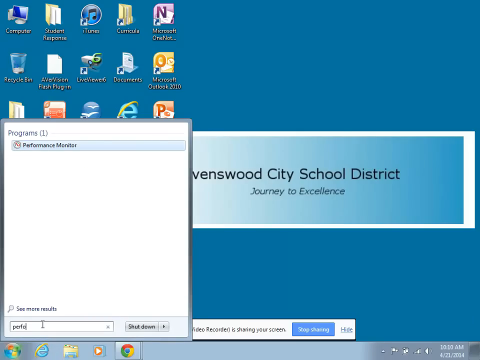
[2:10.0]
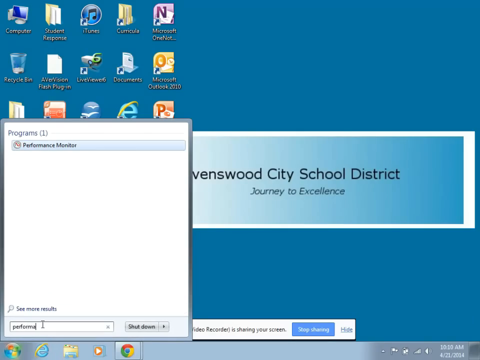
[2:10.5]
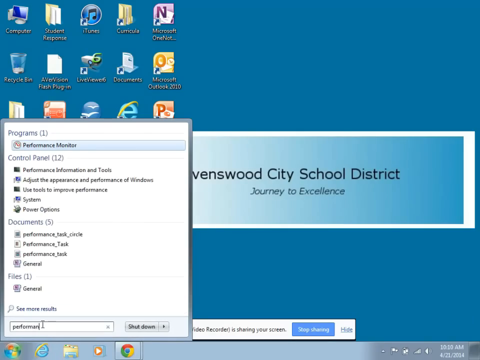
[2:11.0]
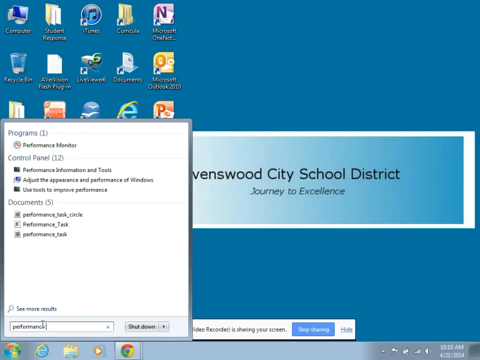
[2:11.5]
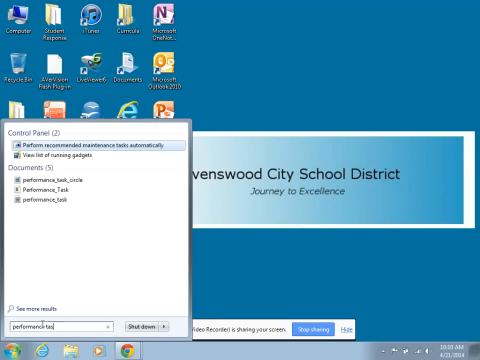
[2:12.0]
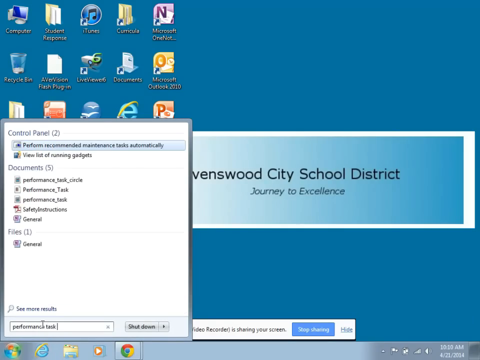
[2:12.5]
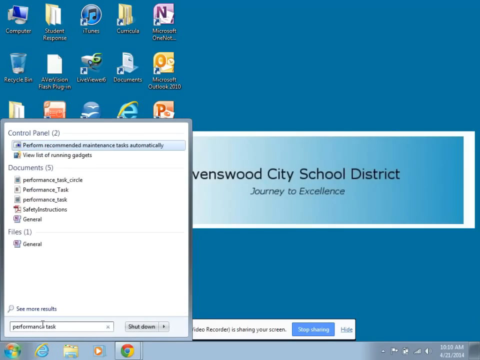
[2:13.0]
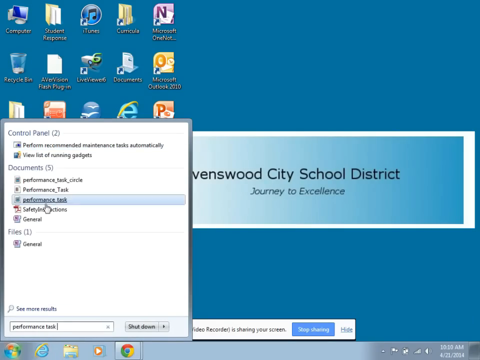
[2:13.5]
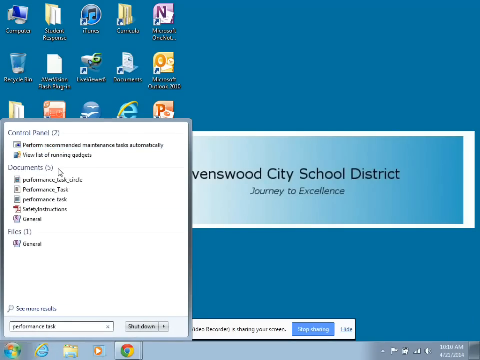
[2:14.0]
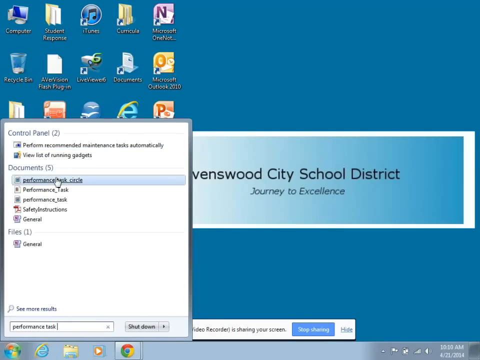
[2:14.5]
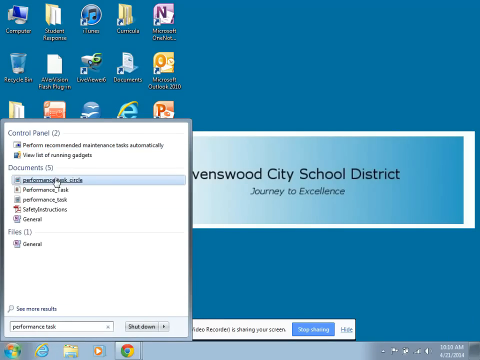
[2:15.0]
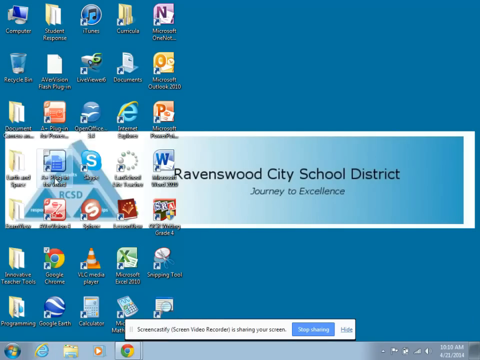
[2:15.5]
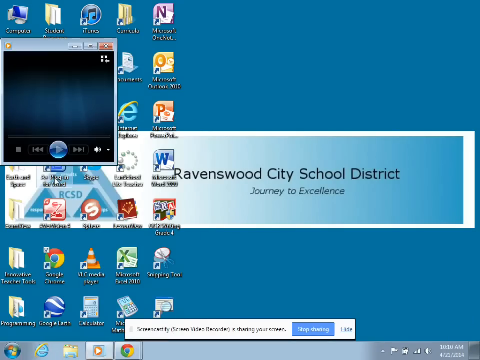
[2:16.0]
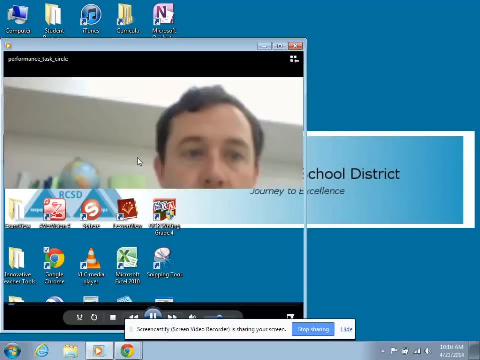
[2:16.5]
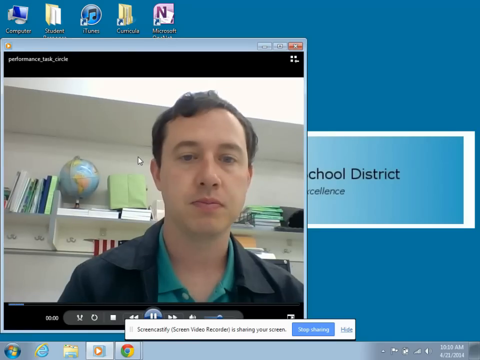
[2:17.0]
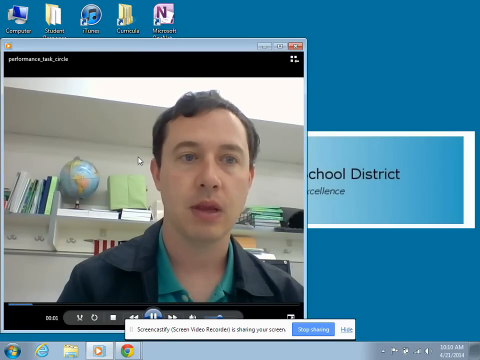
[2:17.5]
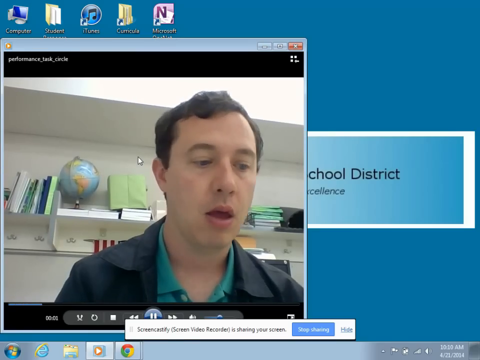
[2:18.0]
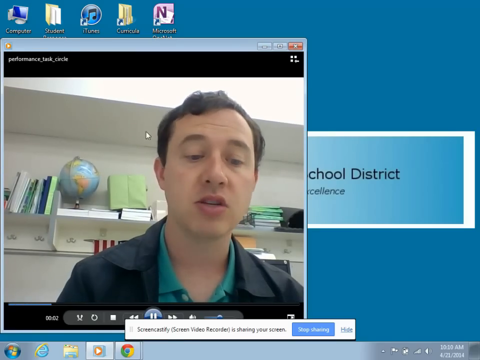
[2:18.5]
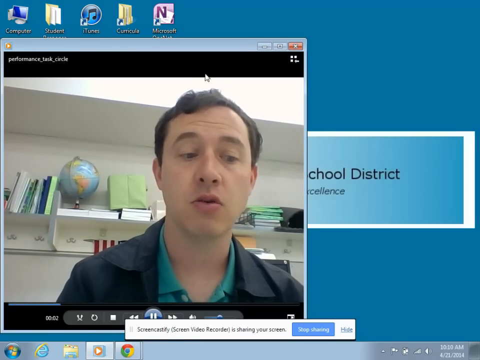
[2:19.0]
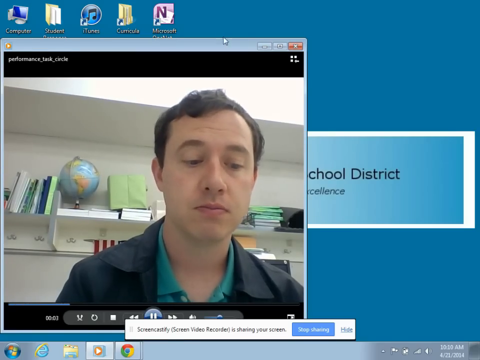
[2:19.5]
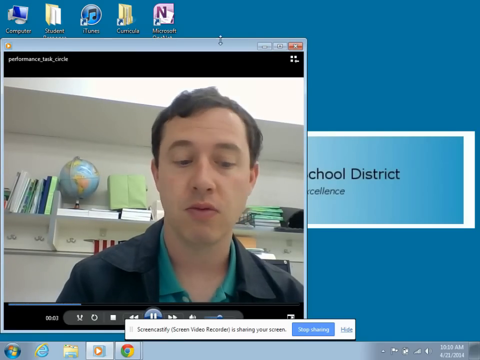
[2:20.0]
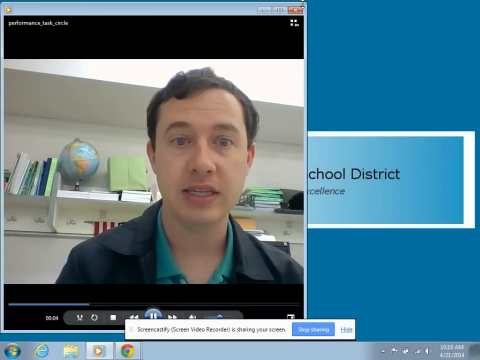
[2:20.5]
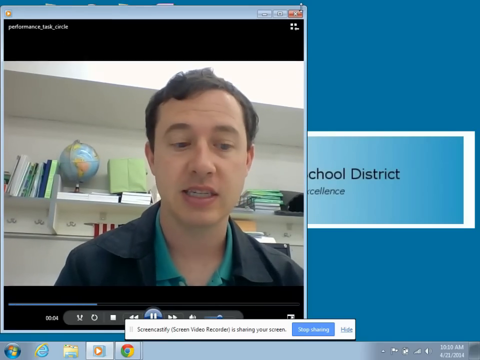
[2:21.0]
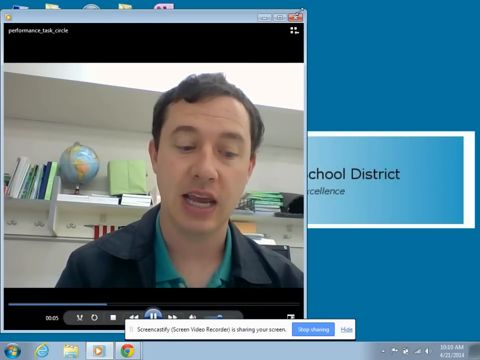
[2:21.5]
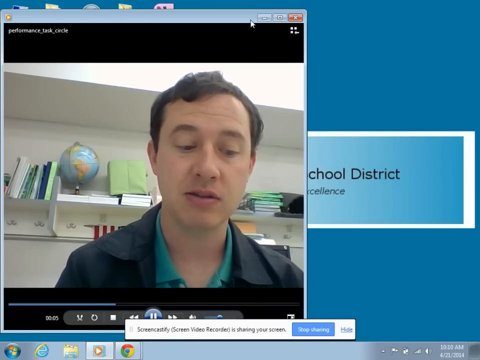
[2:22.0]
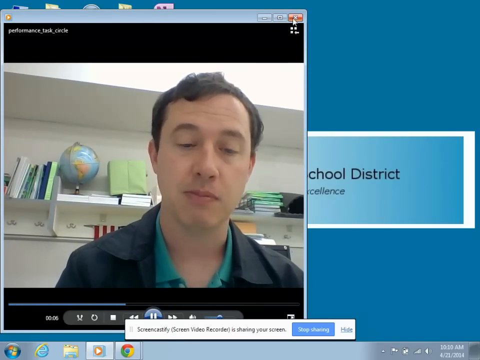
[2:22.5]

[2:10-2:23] He opens performance monitor, but he actually appears to be going back to the video he filmed earlier, apparently saved under the name performance track. The video then ends abruptly without further explanation.